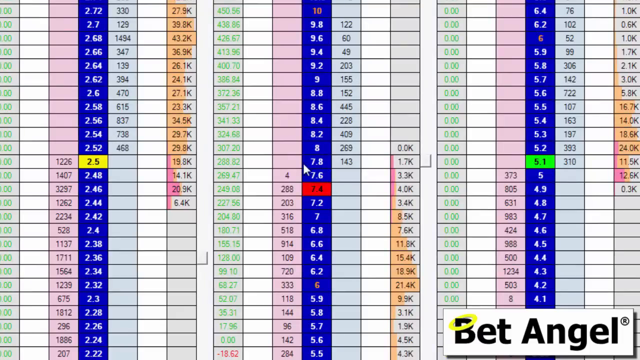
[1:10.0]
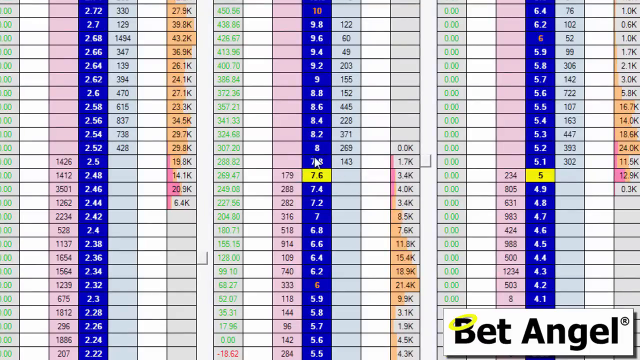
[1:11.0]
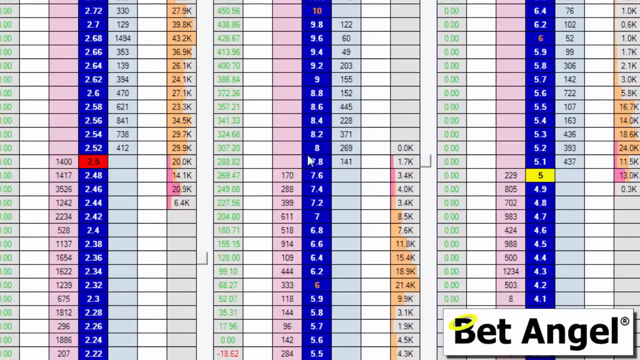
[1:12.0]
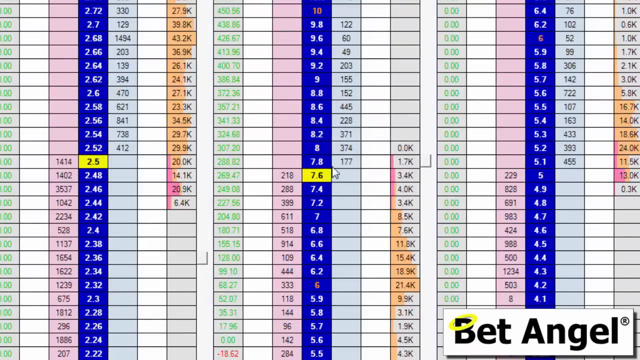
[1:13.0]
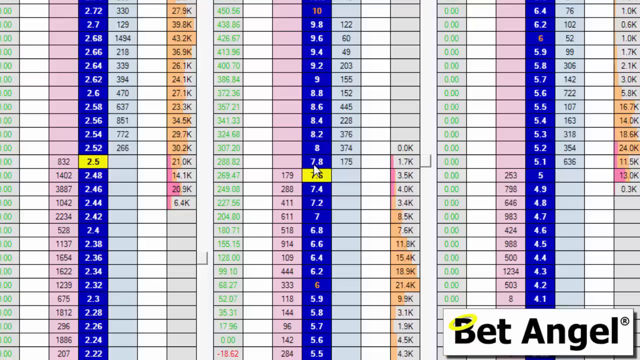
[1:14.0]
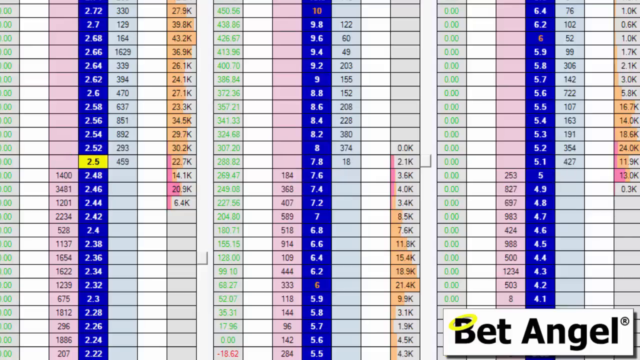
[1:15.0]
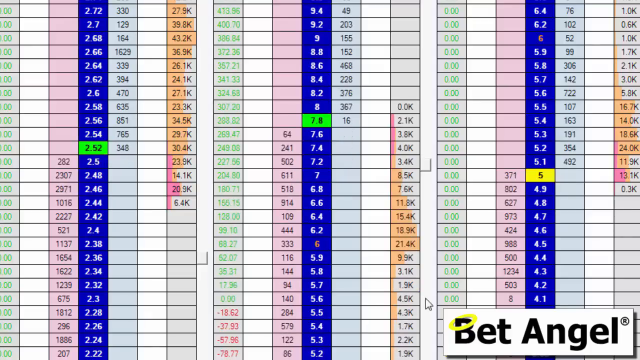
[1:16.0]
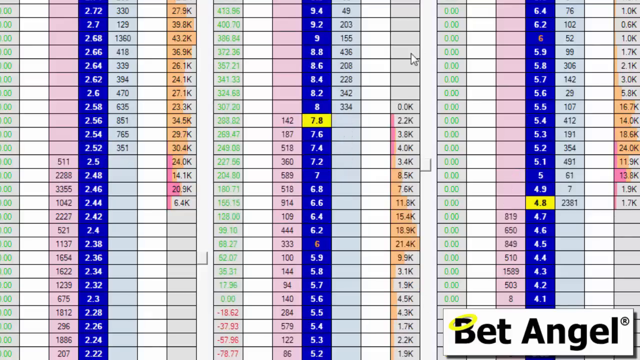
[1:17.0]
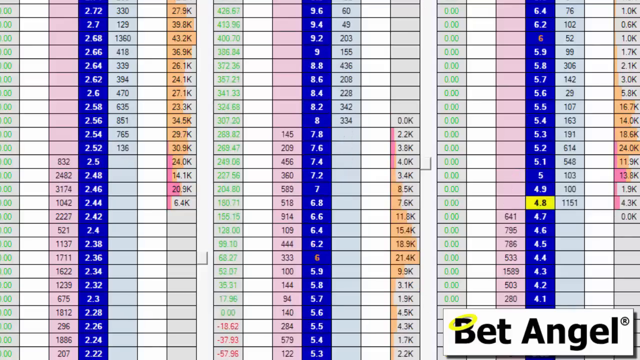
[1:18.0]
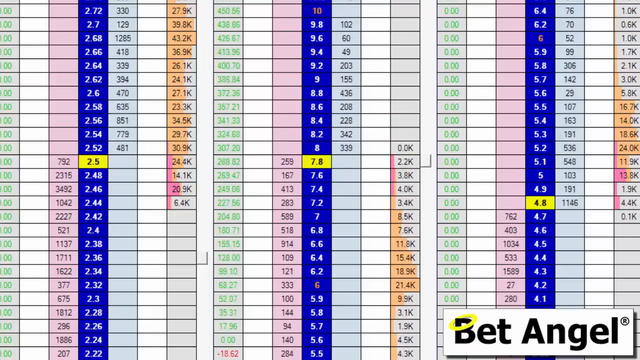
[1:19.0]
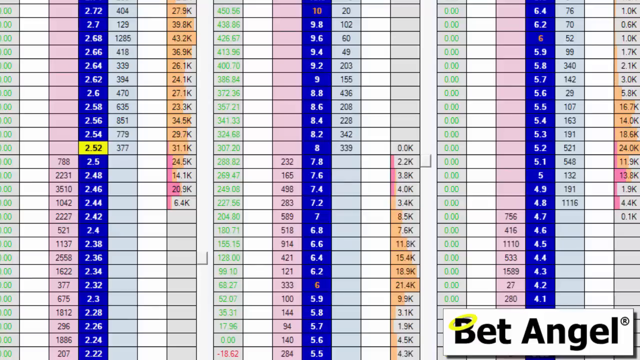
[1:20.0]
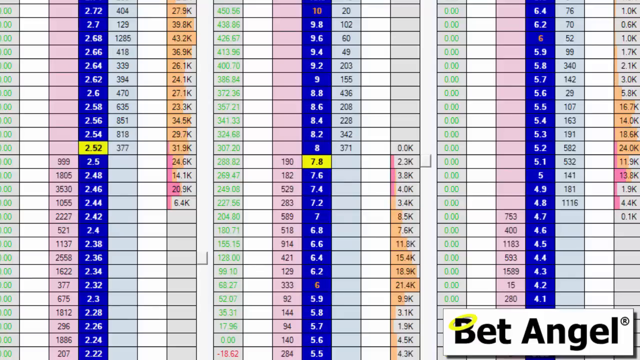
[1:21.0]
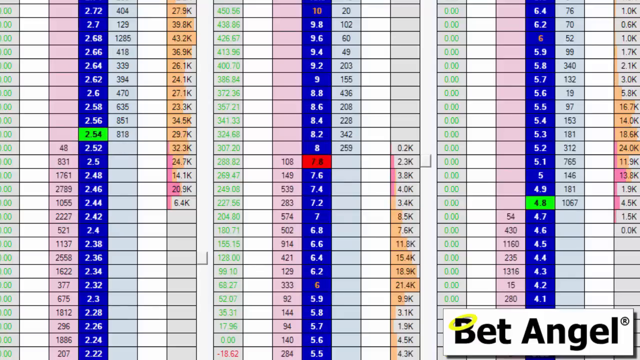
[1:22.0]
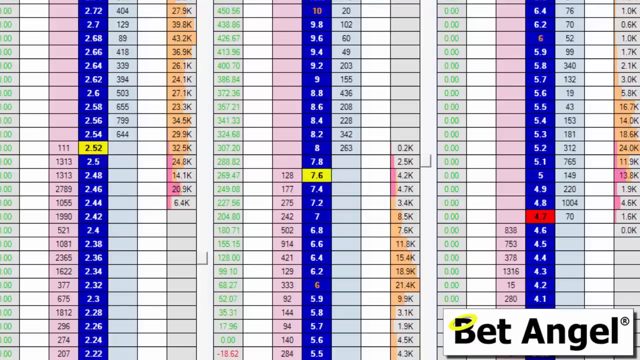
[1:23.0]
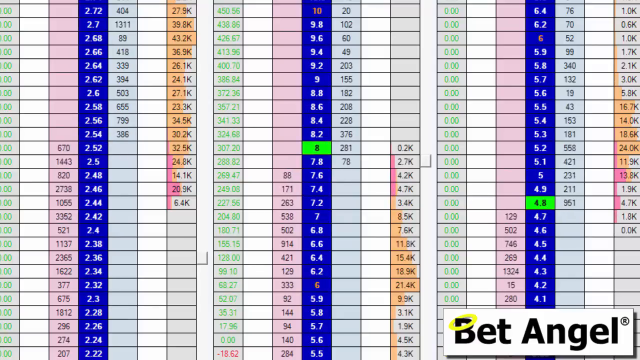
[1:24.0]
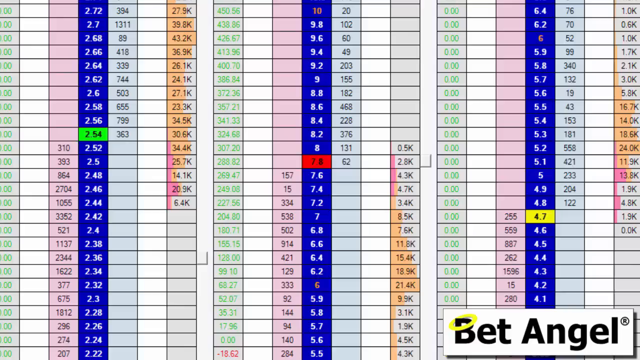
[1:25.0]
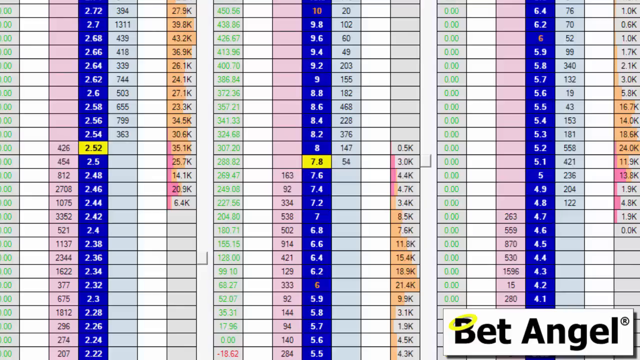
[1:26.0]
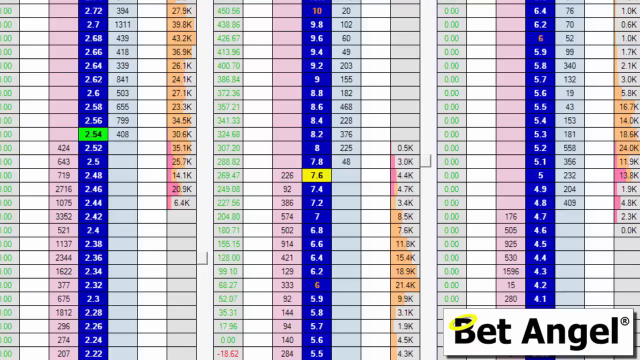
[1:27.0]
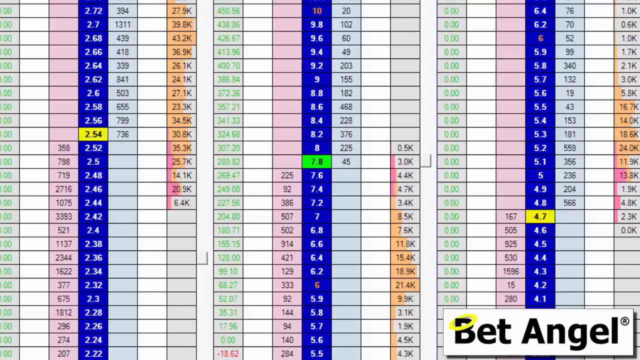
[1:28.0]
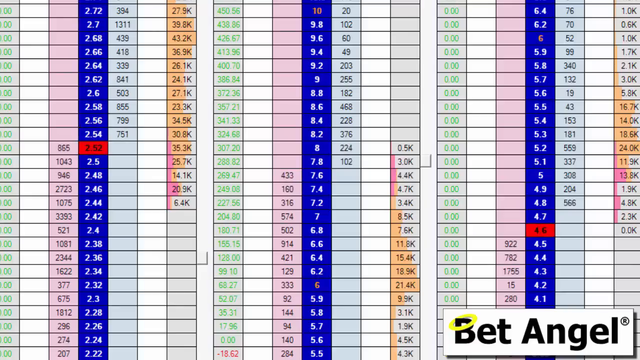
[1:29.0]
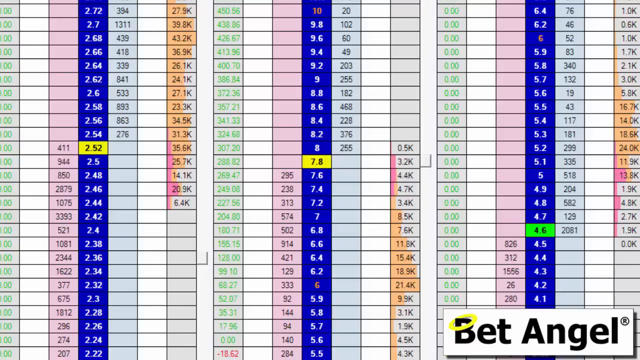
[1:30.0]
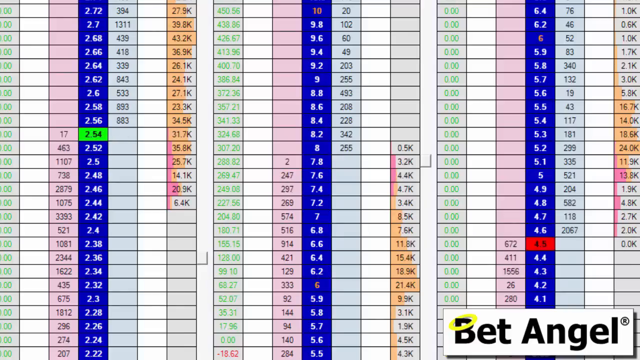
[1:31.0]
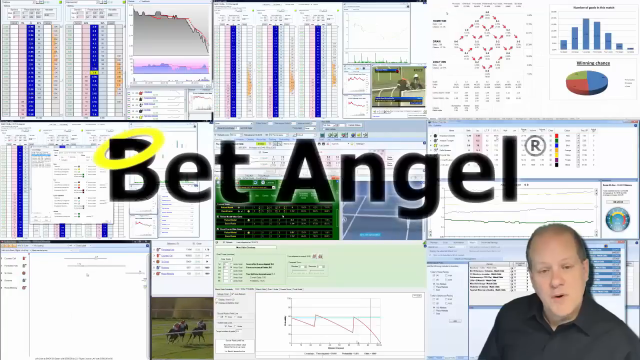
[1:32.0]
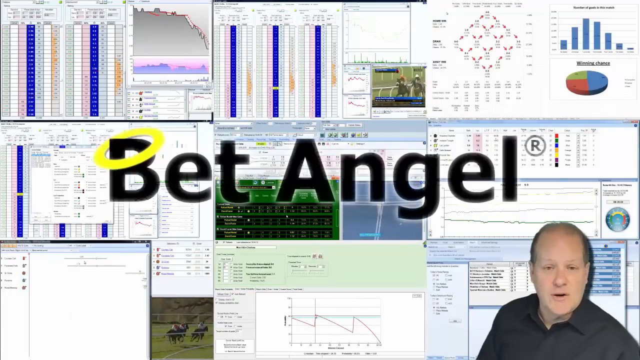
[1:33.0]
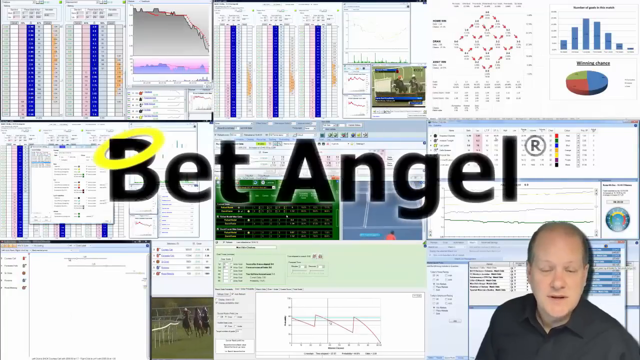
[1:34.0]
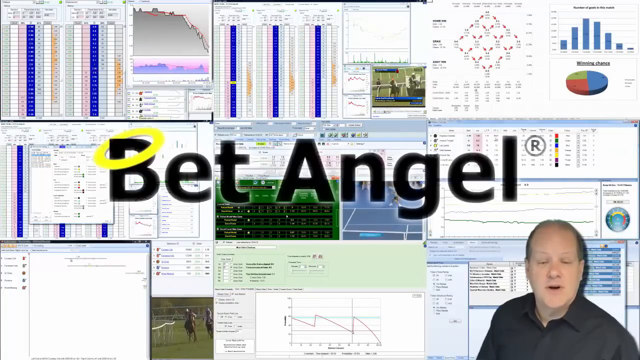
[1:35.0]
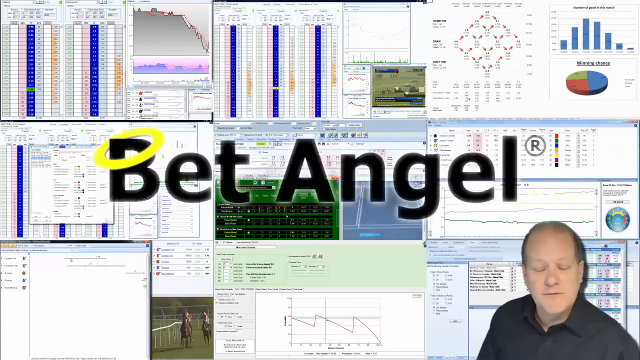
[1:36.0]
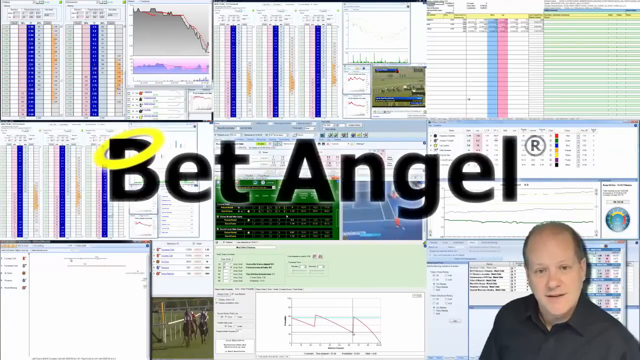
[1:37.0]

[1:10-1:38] The graph's numbers keep changing, and a cursor keeps dropping down the page, moving very quickly. There is one blue column per section, and the bars turn from red to yellow to green as the numbers fluctuate. Then a gentleman appears in the lower left-hand corner of the screen, and he looks like he is speaking. The company name BetAngel is in the middle of the screen with a yellow halo around the B in Bet. Behind BetAngel and the gentleman are all different types of informational graphs: some bar, some lines, some colored, and a pie shape in a circle. It looks like an informational collage.